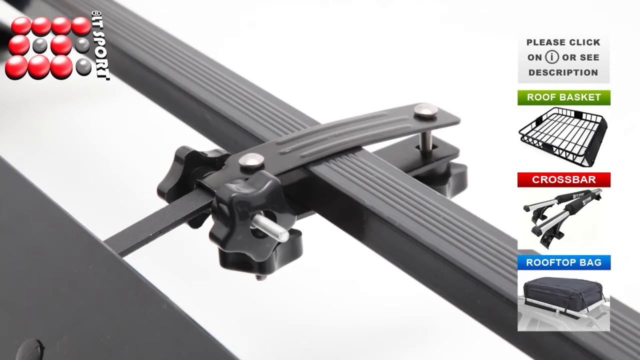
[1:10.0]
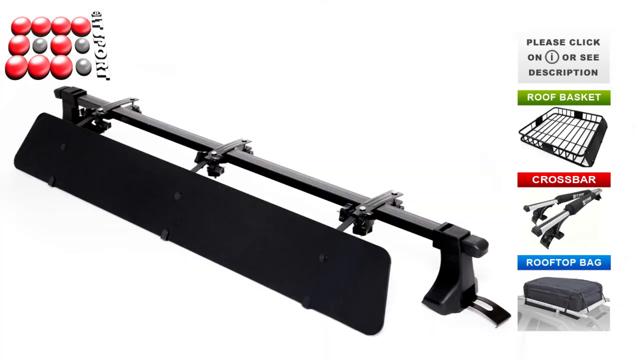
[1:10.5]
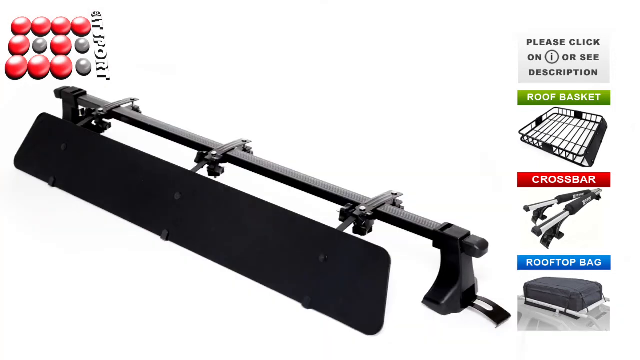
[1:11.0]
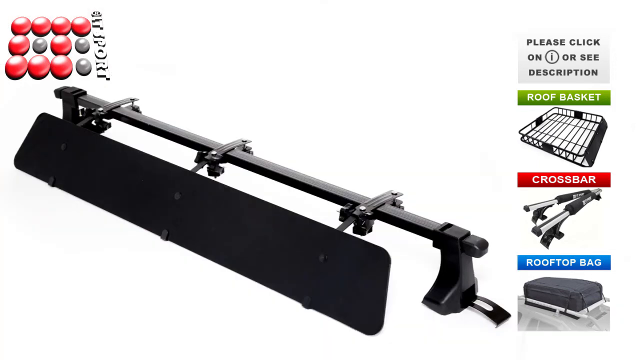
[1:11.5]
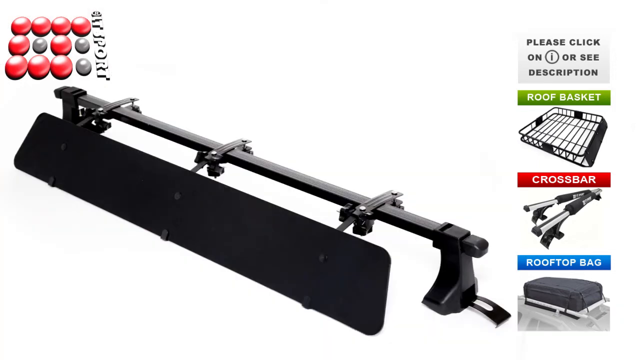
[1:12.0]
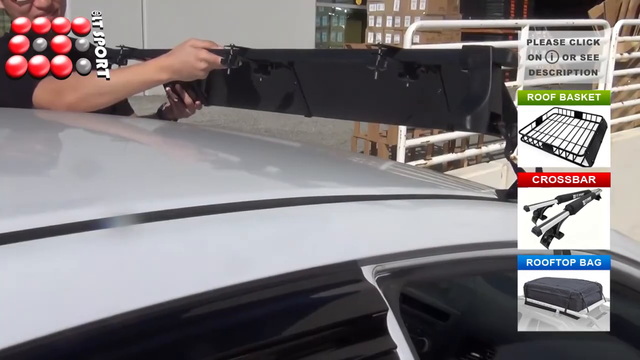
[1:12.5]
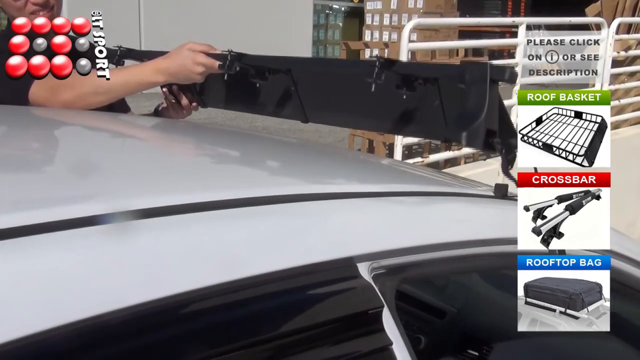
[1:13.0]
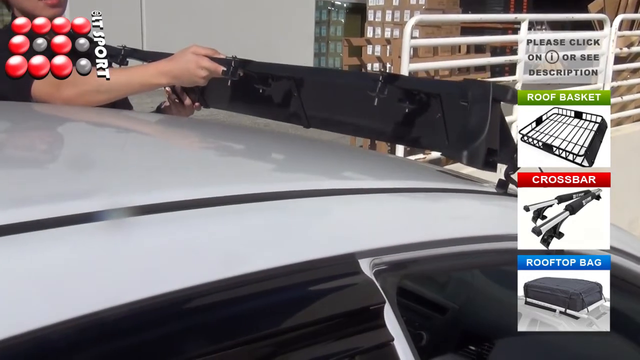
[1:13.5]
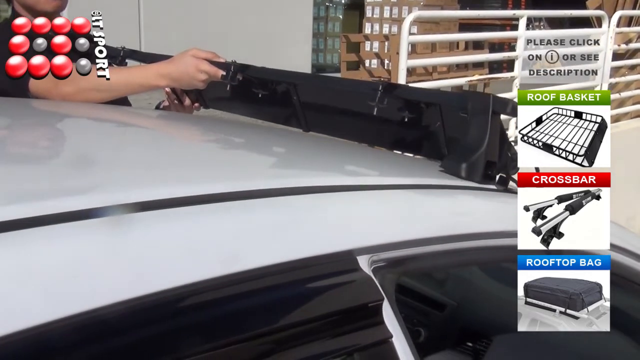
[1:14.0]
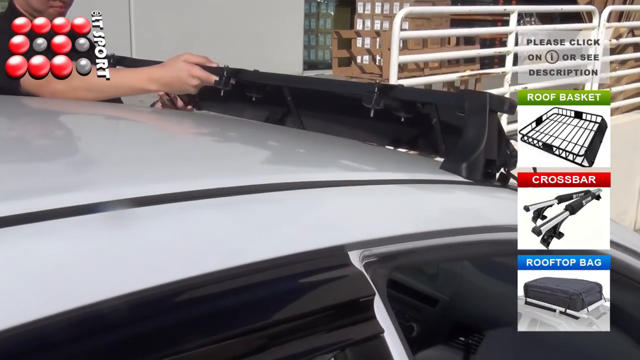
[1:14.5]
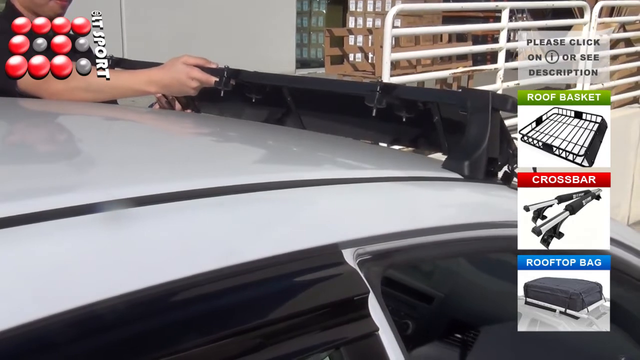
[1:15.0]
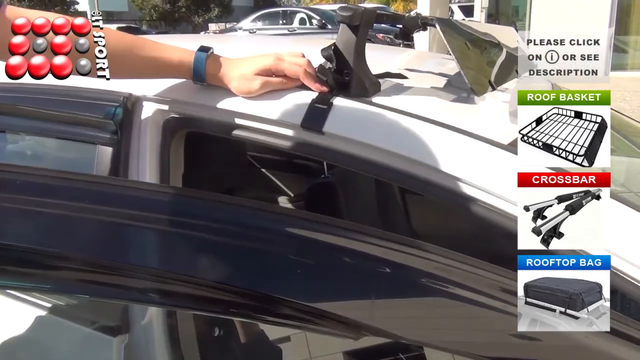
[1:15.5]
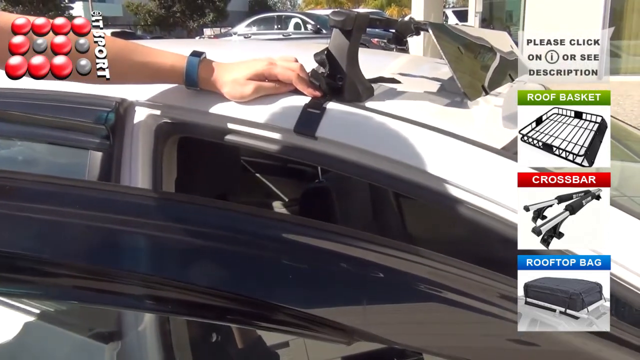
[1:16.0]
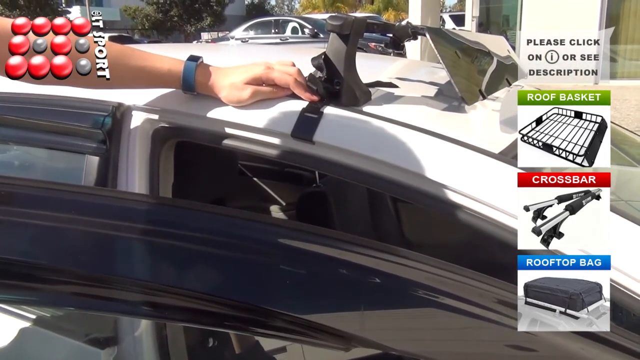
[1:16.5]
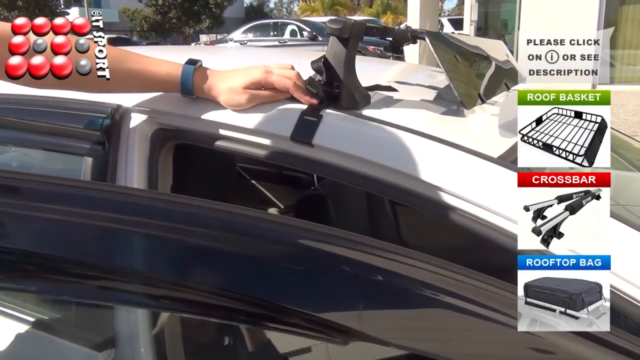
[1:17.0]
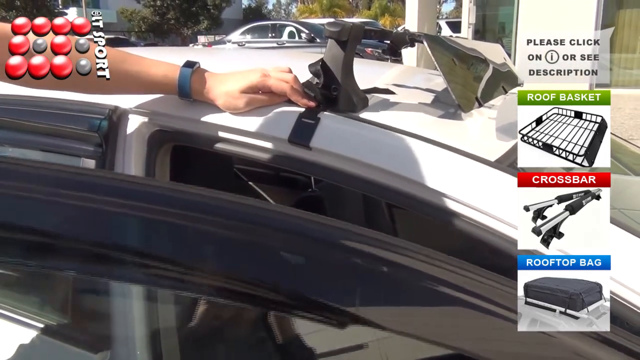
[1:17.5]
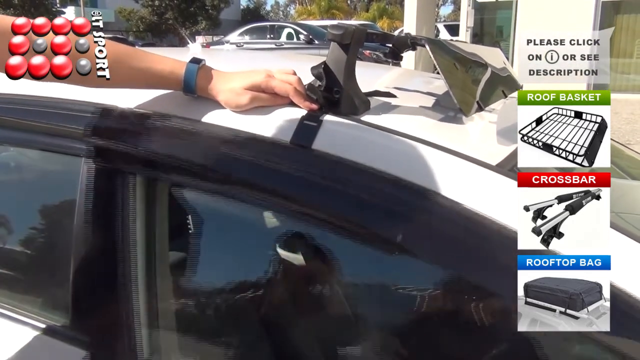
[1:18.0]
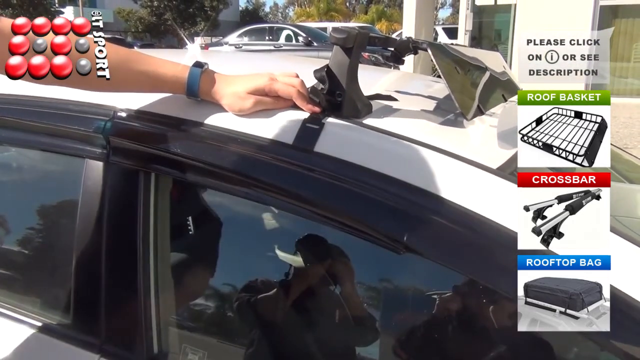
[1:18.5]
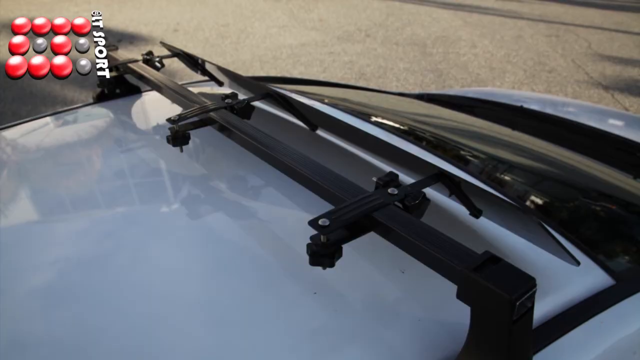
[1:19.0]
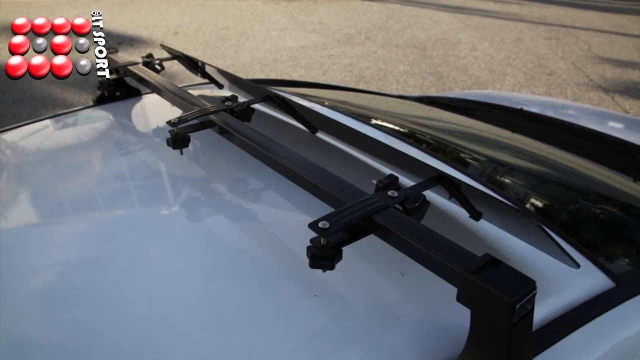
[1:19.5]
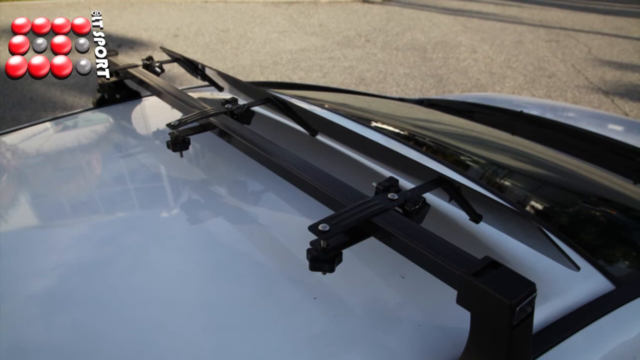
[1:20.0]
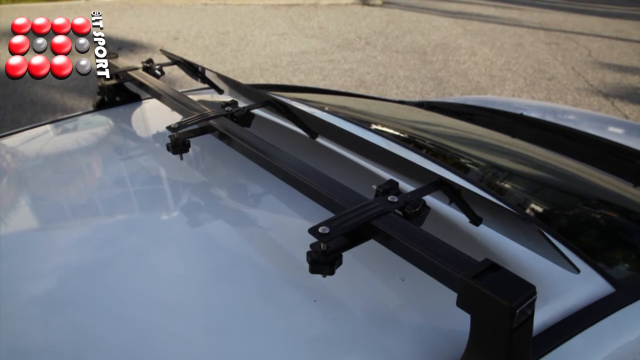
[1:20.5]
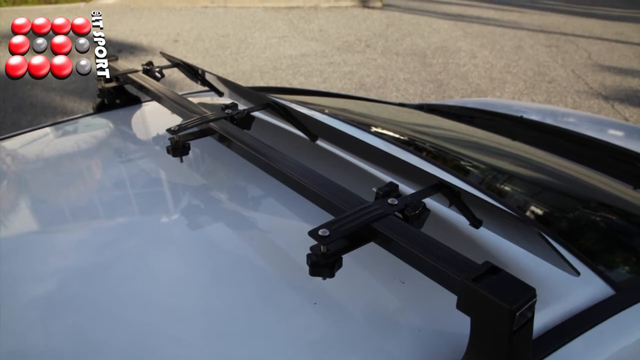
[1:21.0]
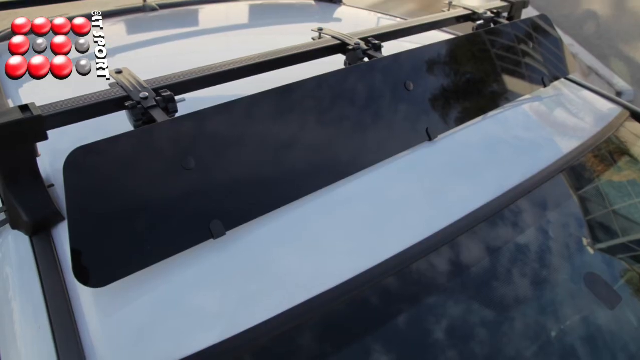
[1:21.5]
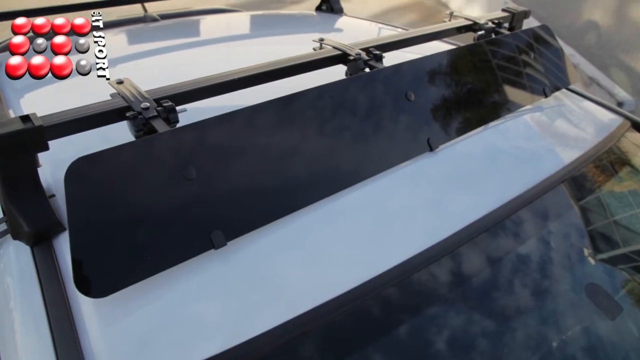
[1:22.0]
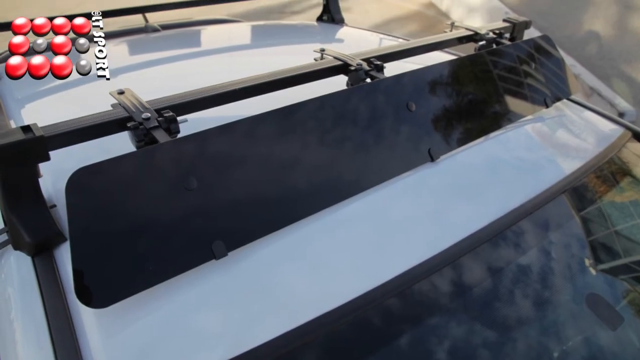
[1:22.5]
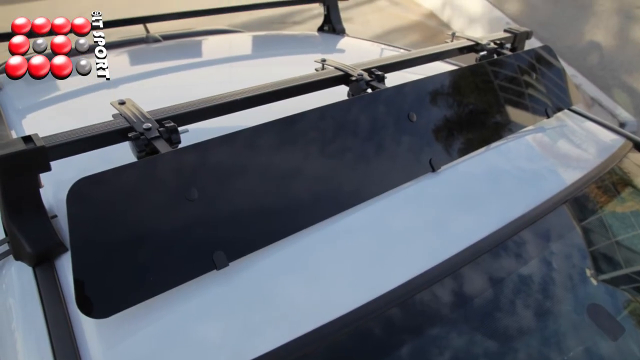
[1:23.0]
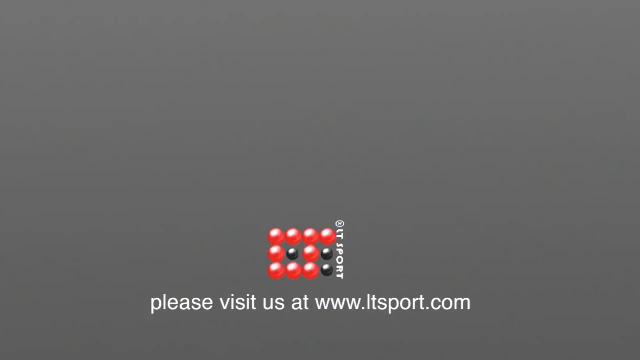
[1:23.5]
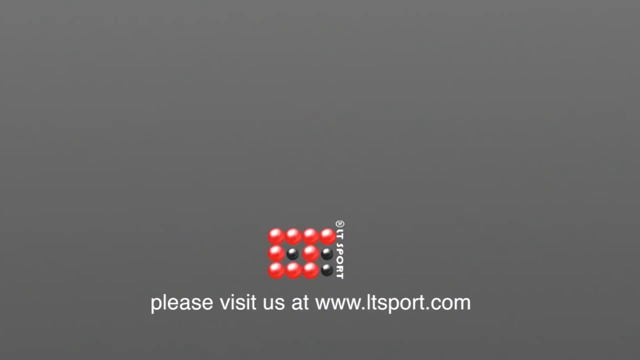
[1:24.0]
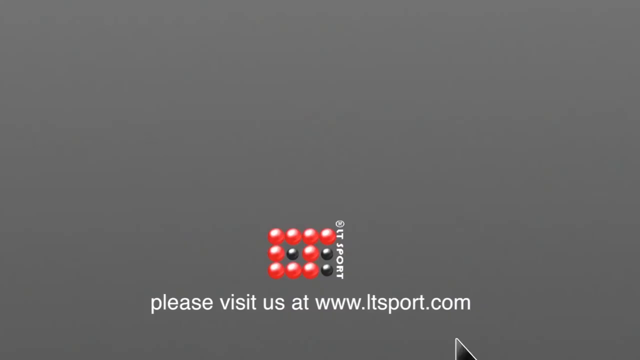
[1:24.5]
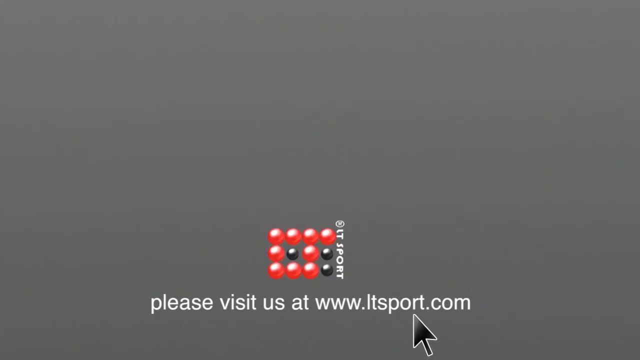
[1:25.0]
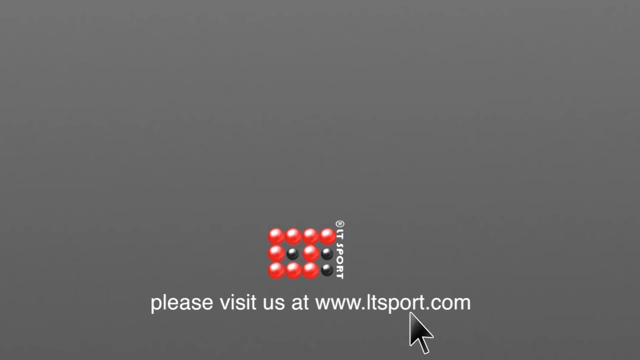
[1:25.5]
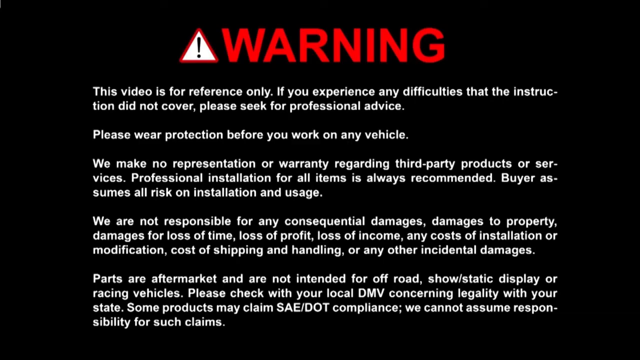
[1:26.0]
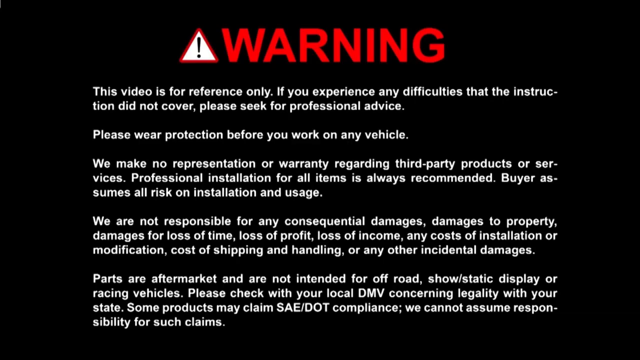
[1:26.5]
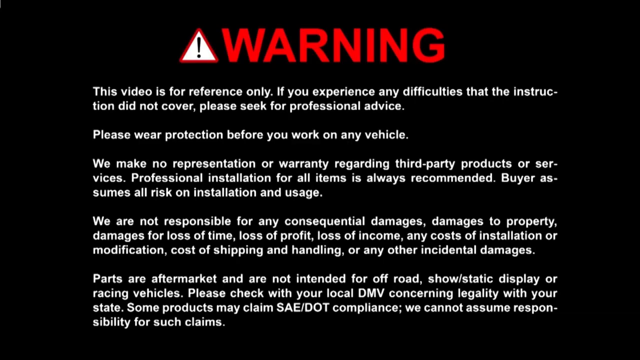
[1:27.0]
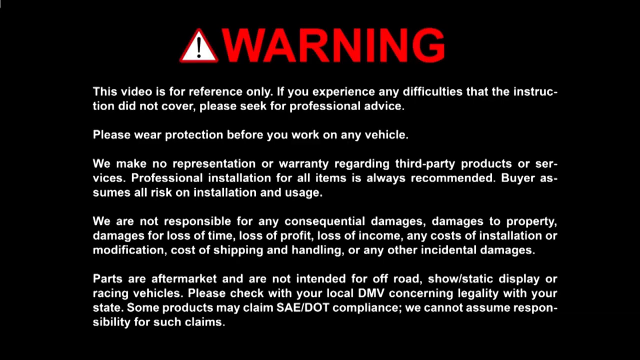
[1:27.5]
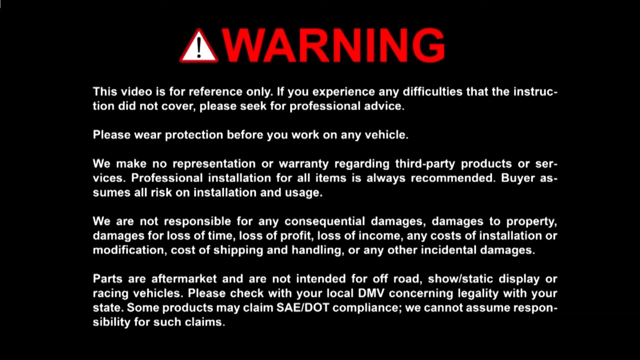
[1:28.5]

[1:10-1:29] The item, which looks like a spoiler like one found on the back of a car, is shown attaching to the car, and the man opens the car door. On-screen text invites viewers to visit "www.ltsport.com", and a warning appears but goes by very quickly. The item on top of the car is made of thin plastic, maybe a quarter inch thick, and is neither quite shiny nor quite matte. It is definitely not round. Other items are also shown, with the LT Sport name.